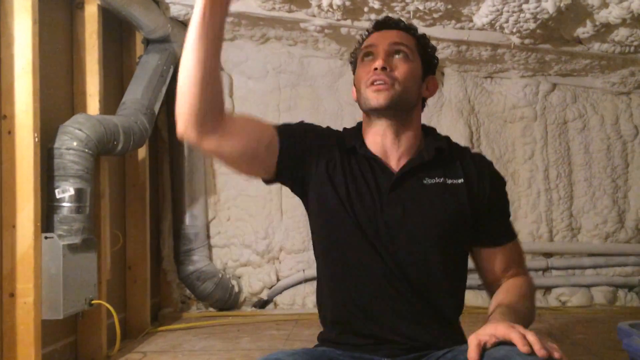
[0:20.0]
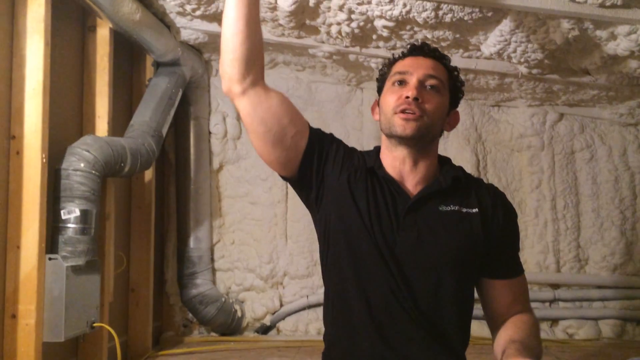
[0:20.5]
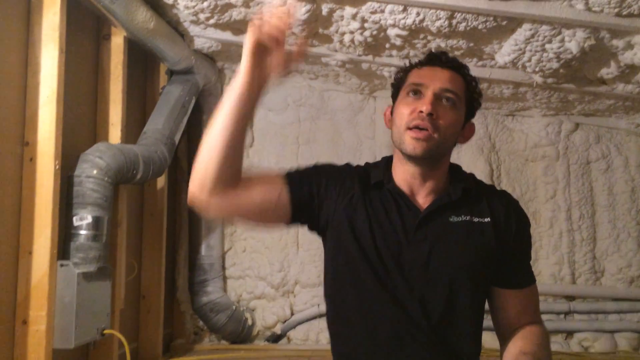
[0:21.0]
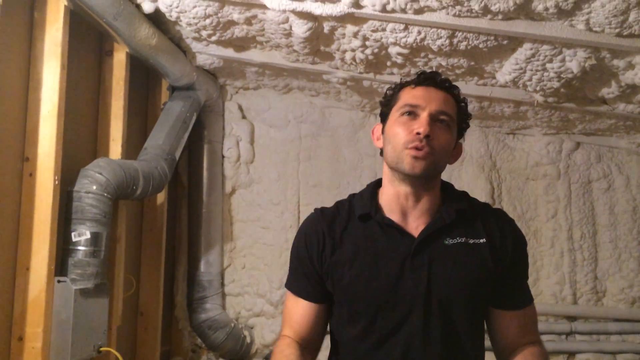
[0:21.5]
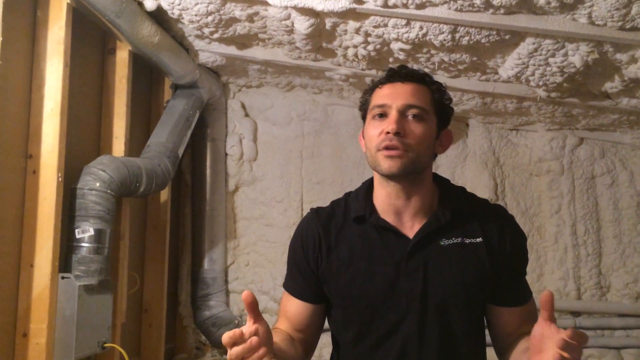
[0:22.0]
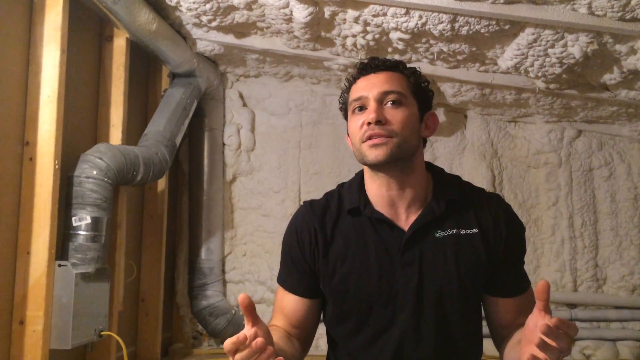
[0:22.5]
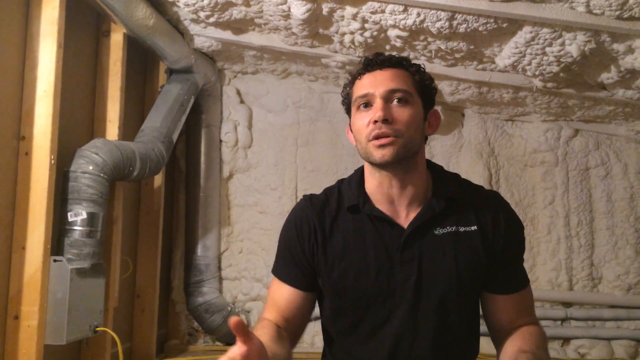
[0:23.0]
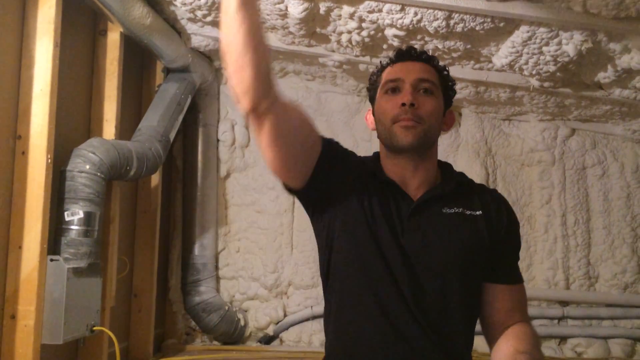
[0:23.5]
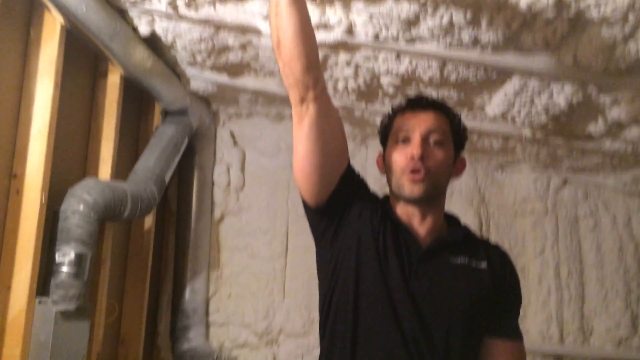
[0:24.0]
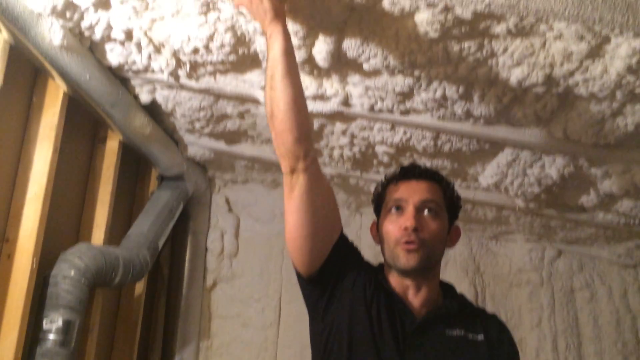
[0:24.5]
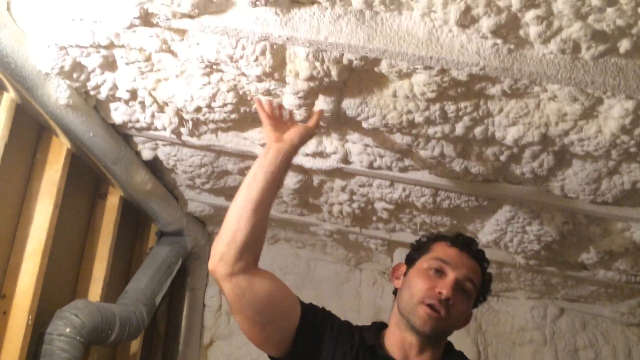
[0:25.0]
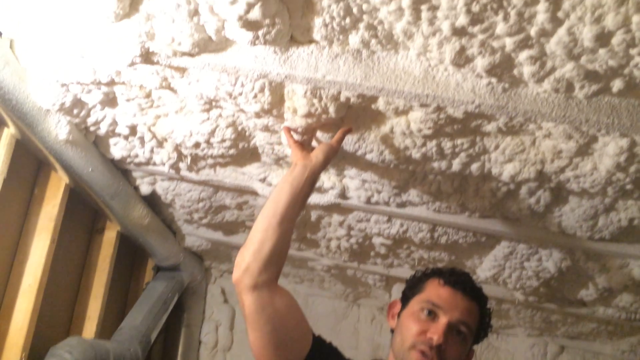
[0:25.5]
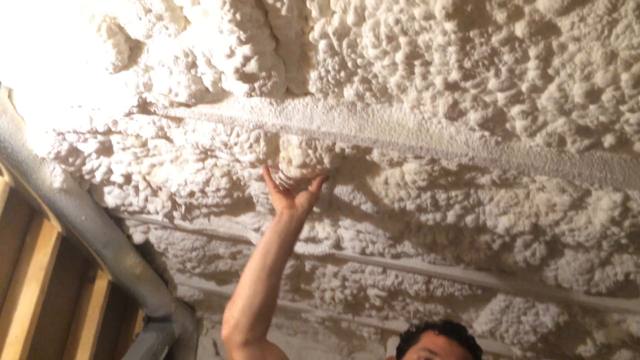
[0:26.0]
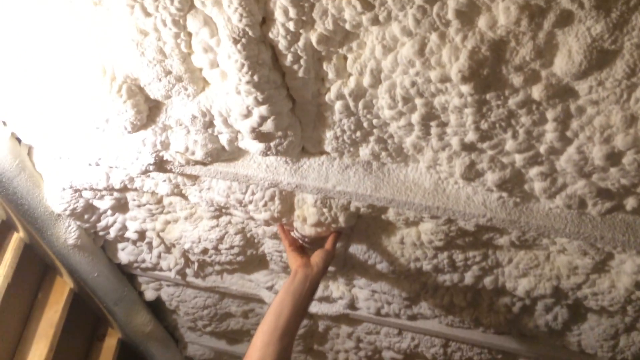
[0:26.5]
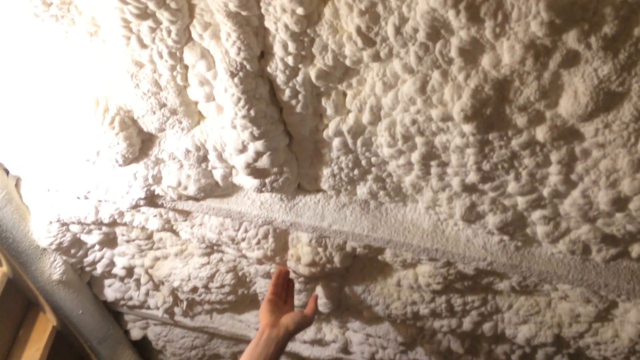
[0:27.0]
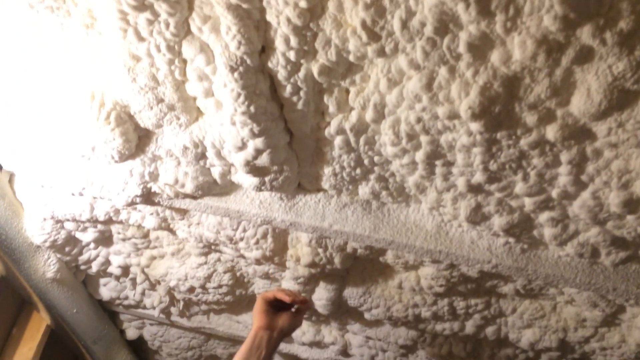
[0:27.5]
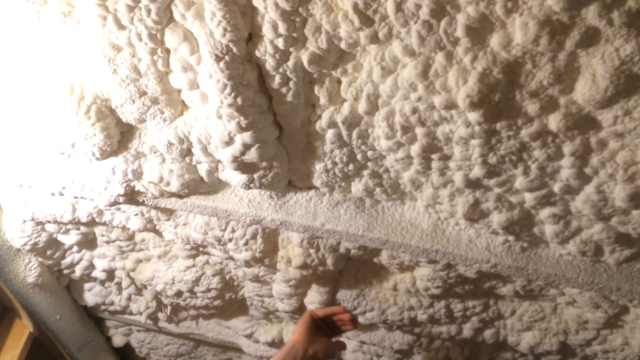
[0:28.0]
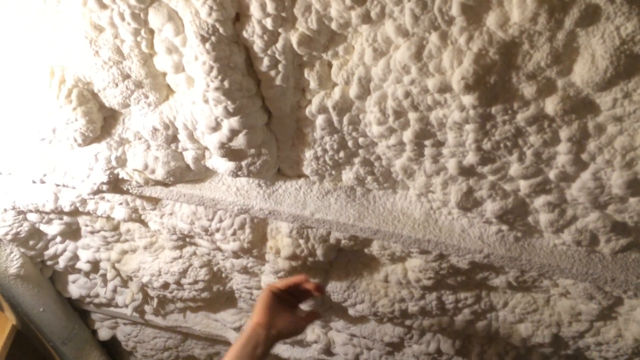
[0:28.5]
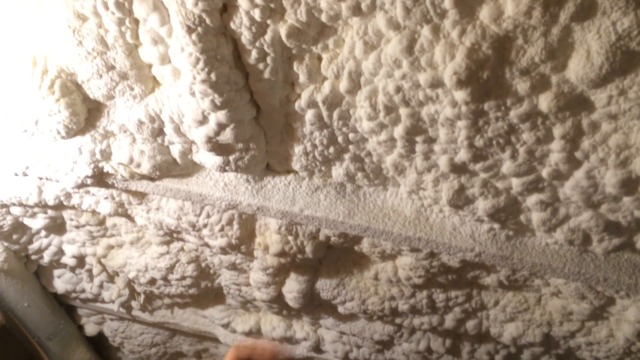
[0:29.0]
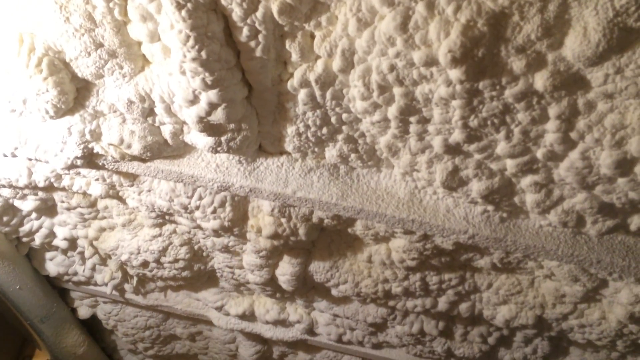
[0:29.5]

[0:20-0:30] The man keeps showing the roof of the cooler room, touching it, and seems to be explaining about it.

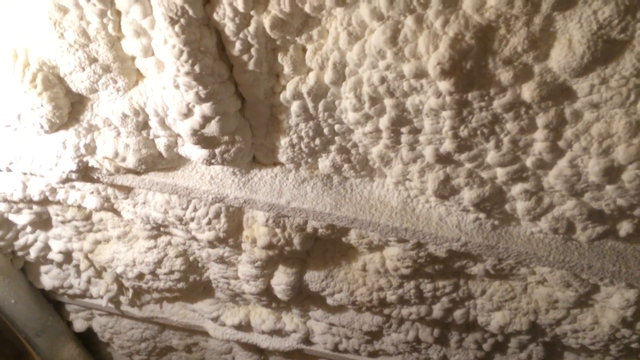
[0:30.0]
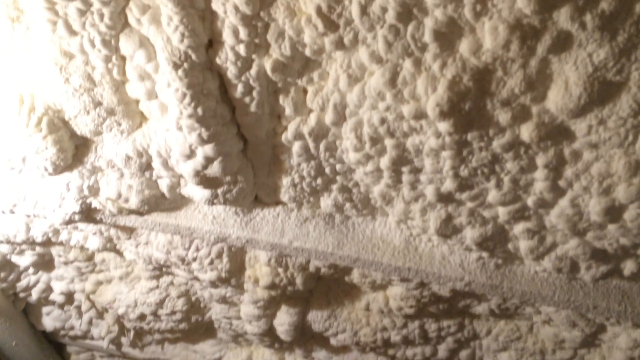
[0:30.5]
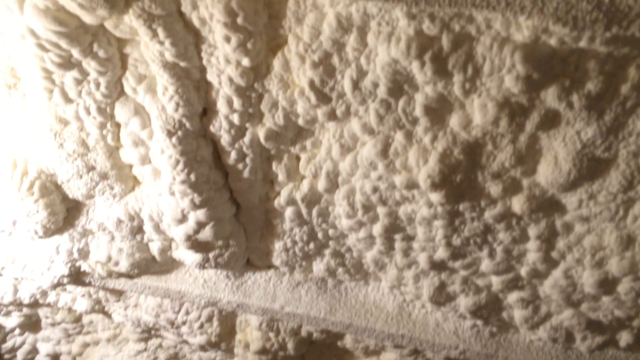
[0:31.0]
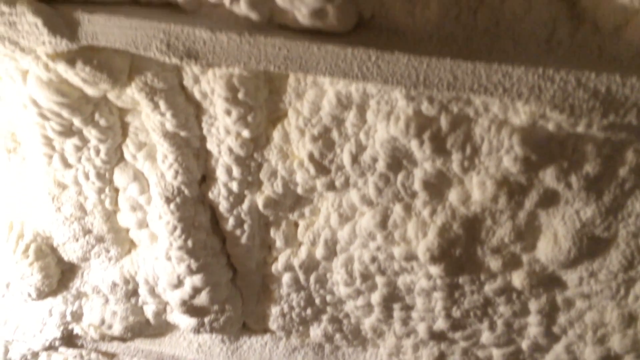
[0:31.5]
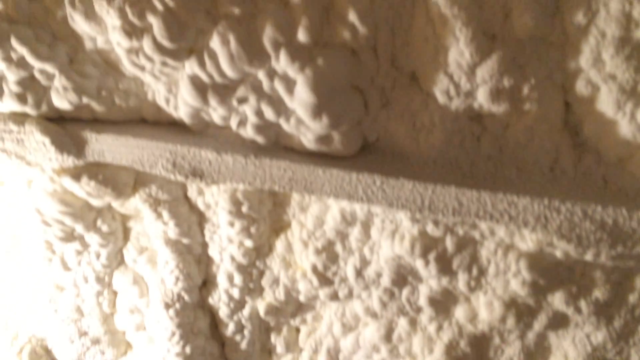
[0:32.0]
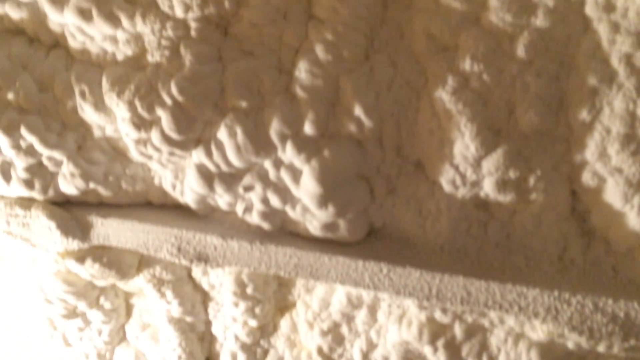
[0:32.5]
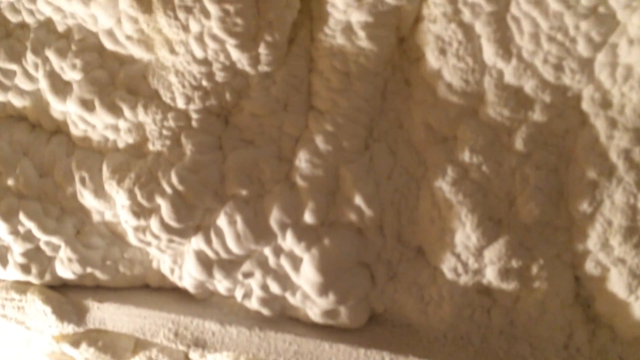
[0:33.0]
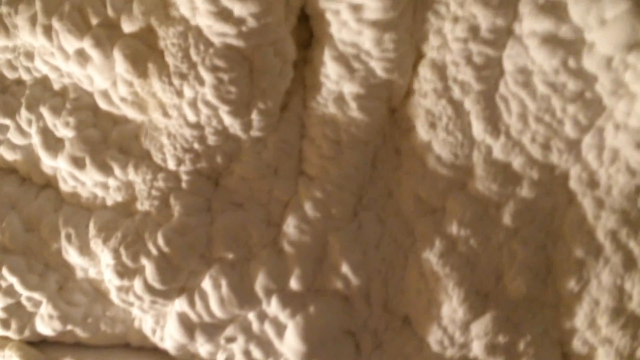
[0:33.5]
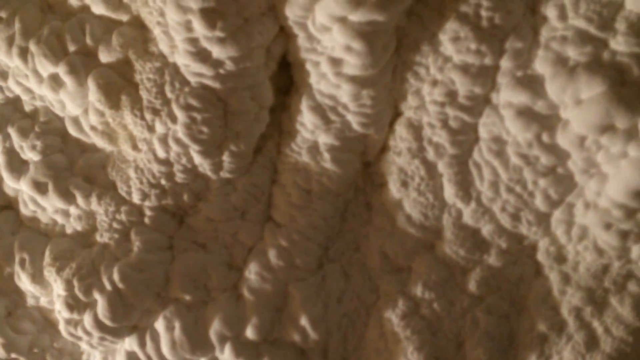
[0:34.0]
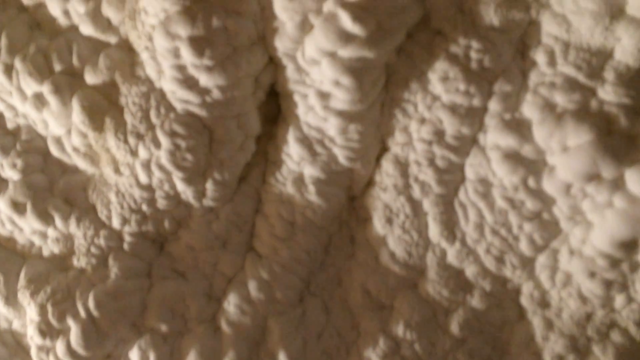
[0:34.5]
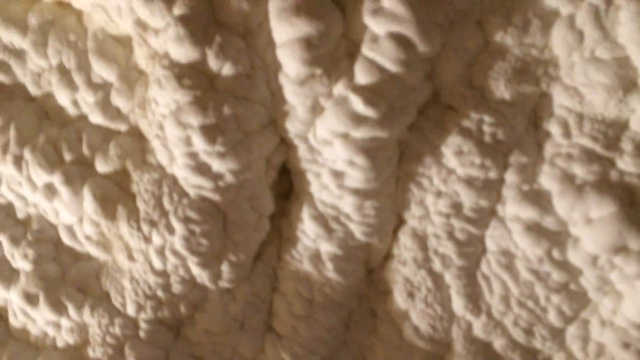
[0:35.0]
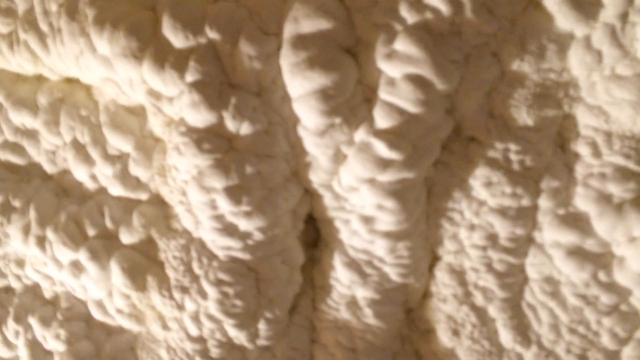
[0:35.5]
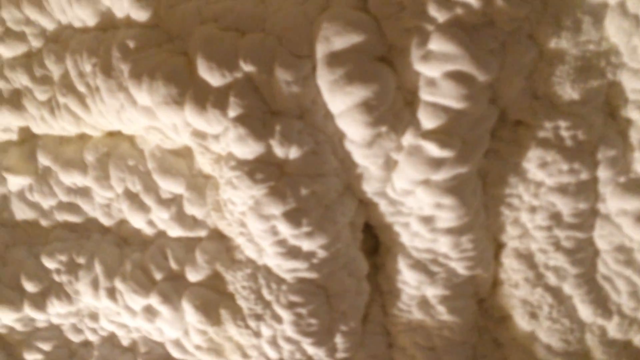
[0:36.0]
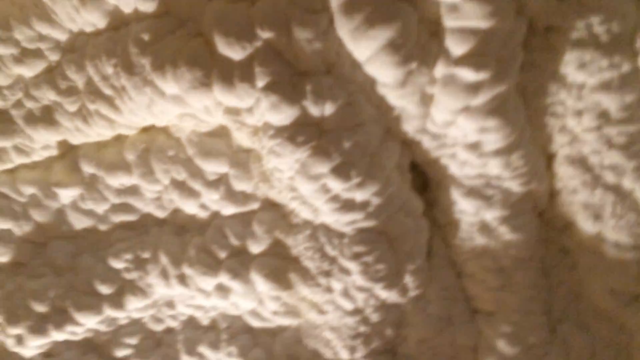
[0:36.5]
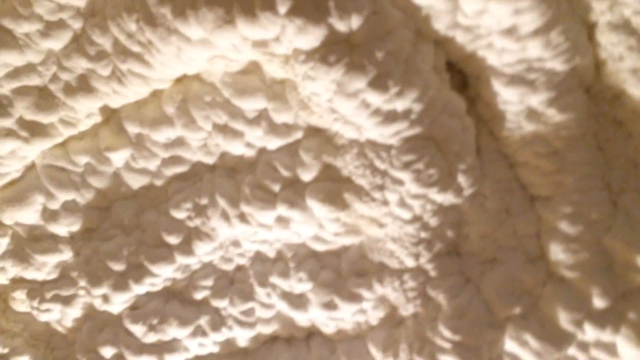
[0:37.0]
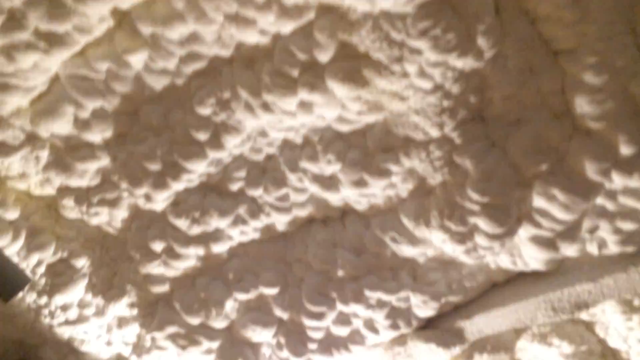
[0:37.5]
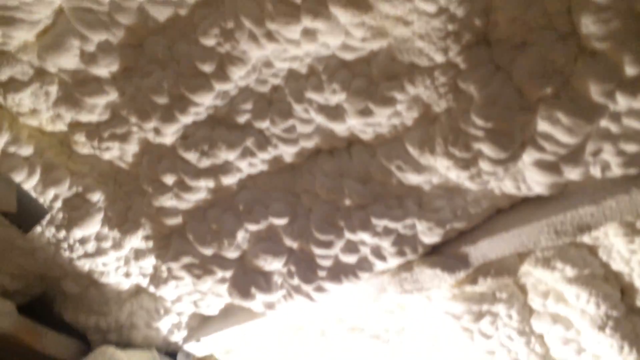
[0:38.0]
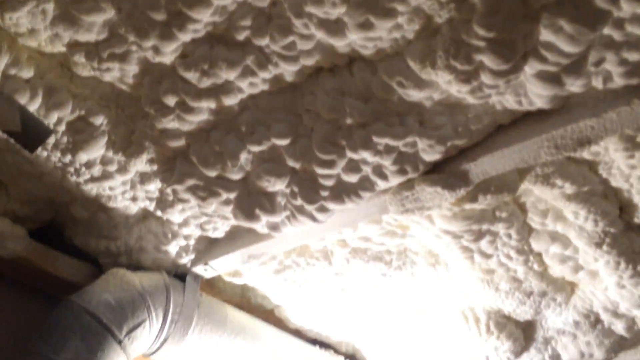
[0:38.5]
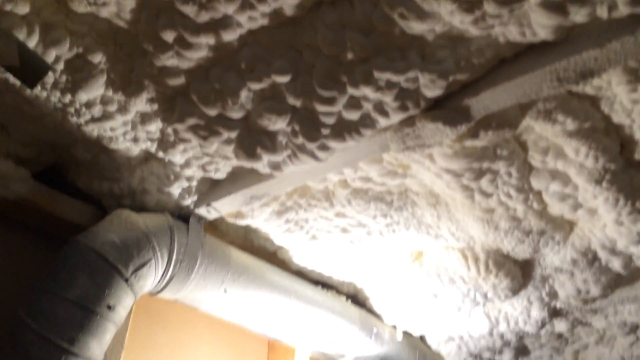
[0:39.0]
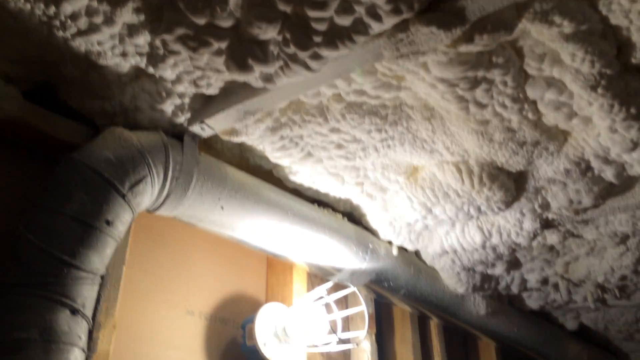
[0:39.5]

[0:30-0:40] The camera shows around the room, with more of the room and less of the man in view. It moves up in the room, showing the foam on the ceiling, which looks strong and looks like it has been applied heavily. It is hard to tell what the room is for.